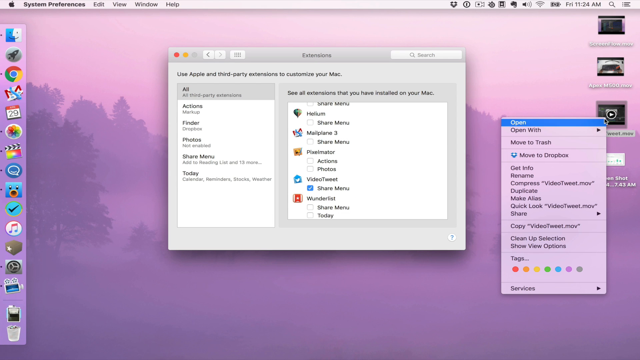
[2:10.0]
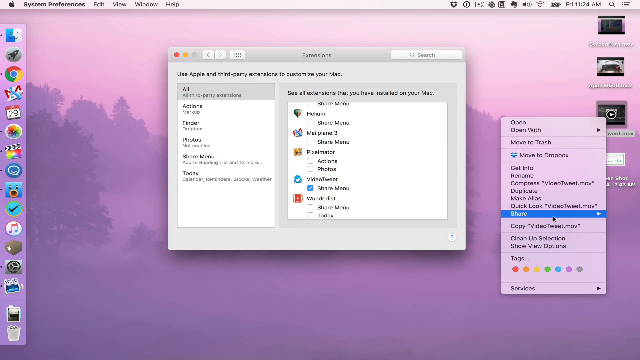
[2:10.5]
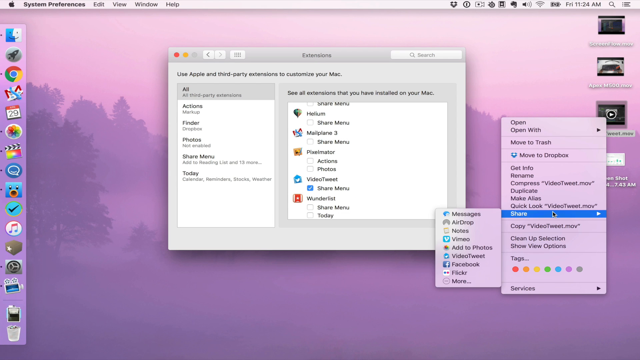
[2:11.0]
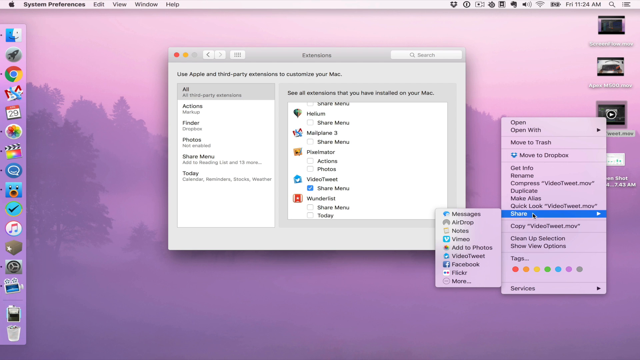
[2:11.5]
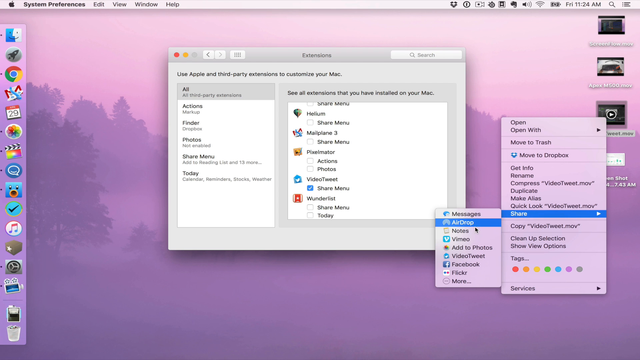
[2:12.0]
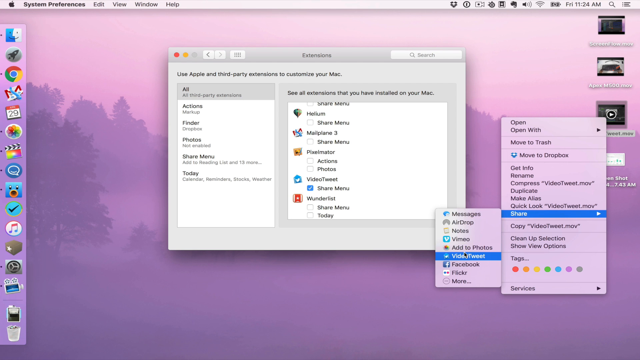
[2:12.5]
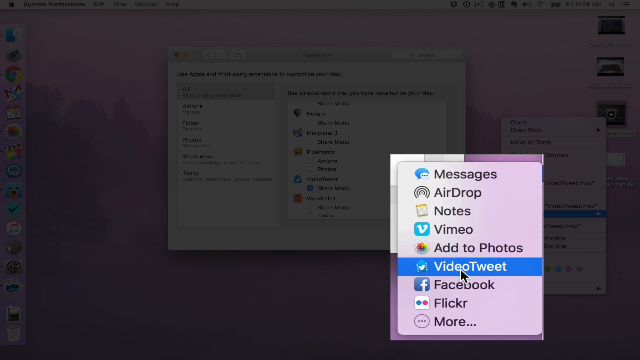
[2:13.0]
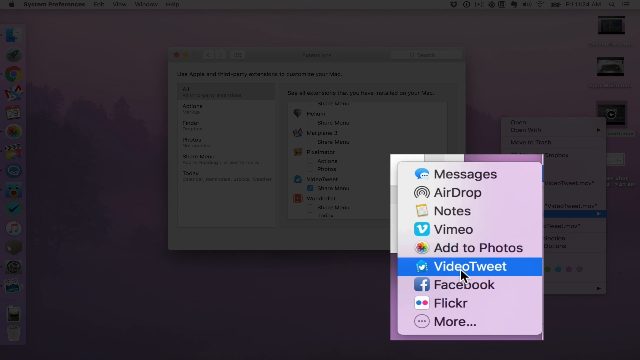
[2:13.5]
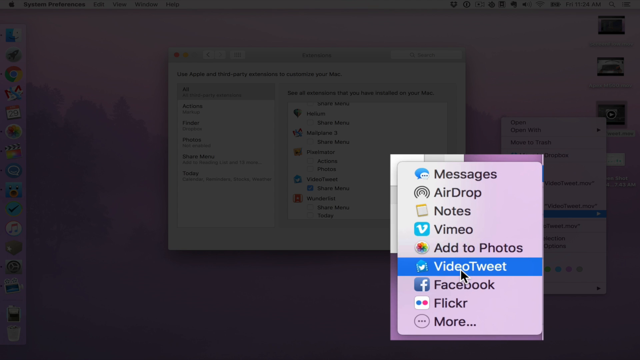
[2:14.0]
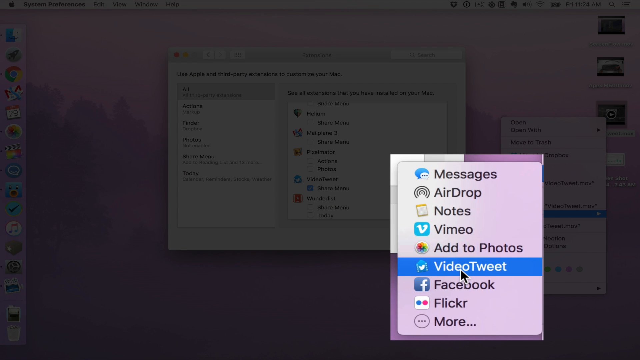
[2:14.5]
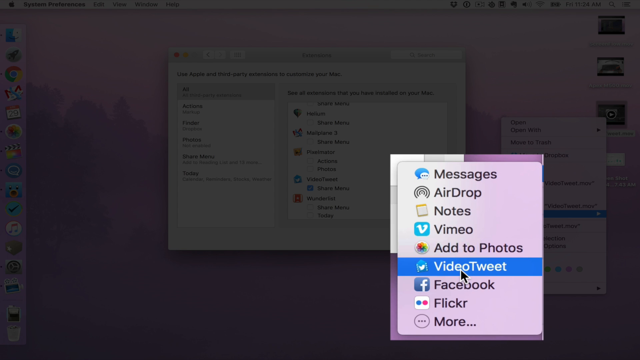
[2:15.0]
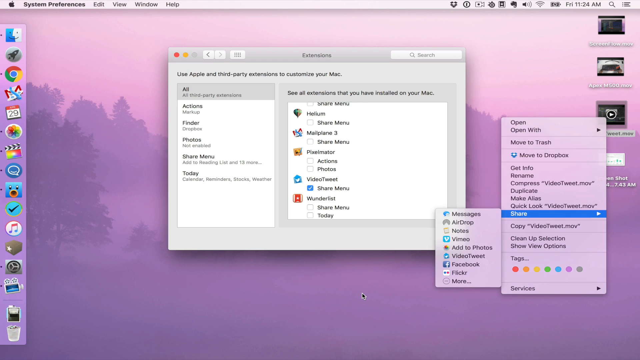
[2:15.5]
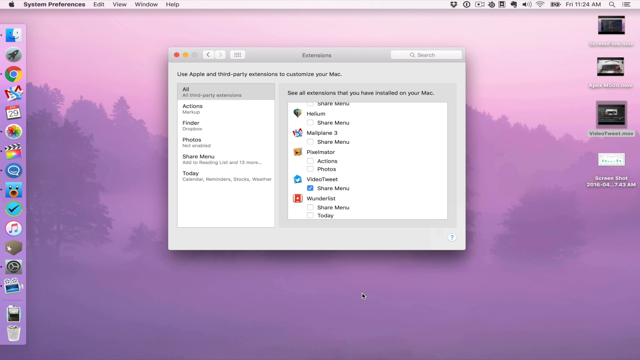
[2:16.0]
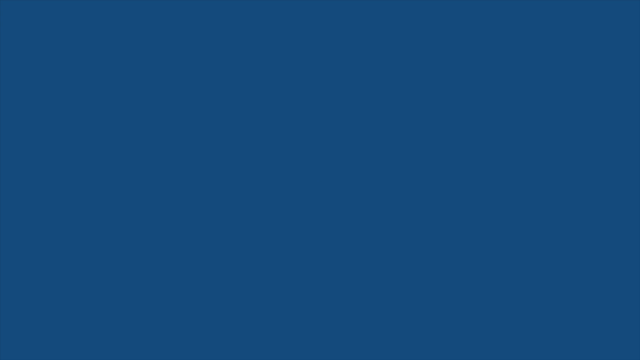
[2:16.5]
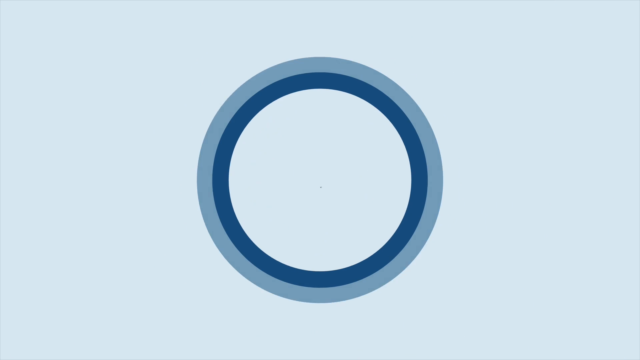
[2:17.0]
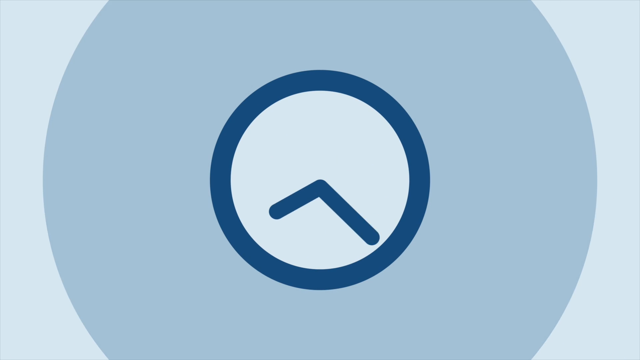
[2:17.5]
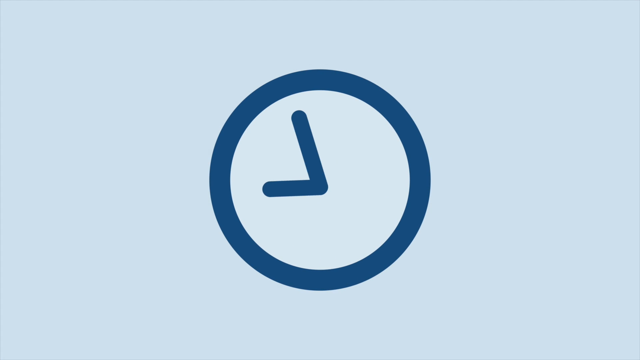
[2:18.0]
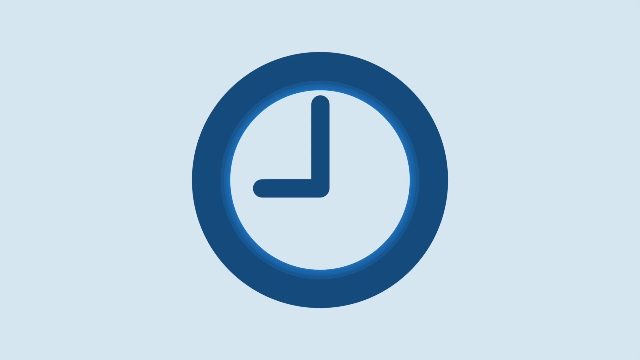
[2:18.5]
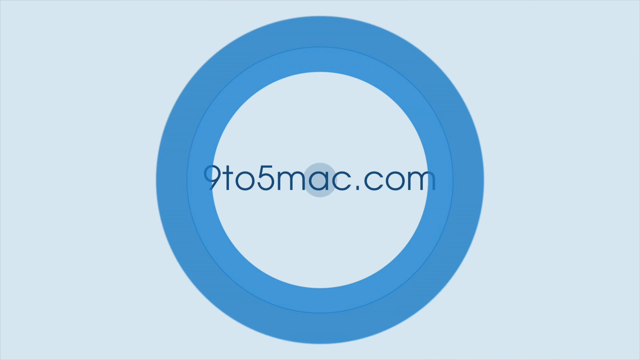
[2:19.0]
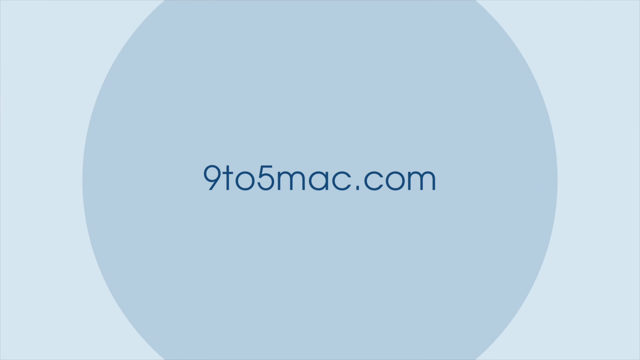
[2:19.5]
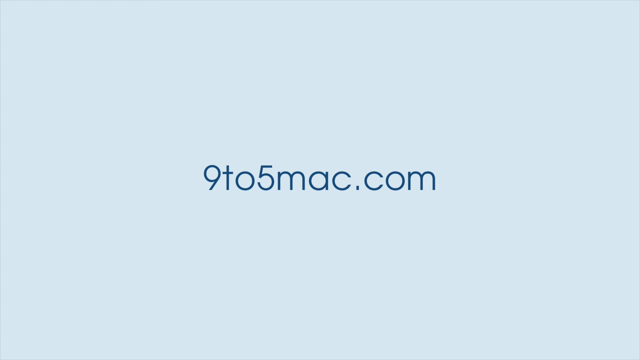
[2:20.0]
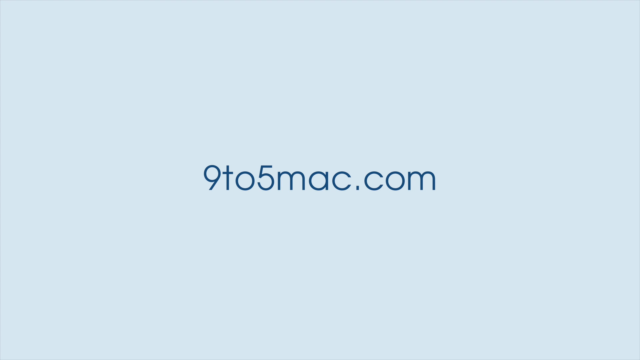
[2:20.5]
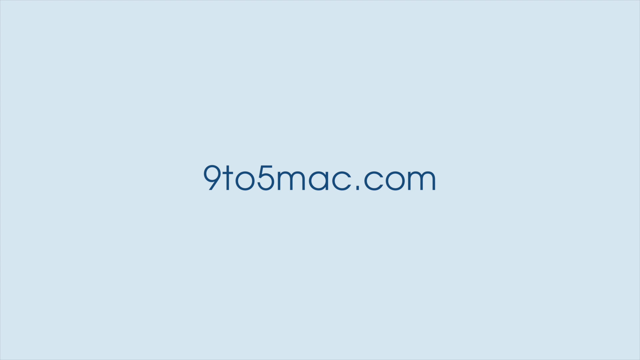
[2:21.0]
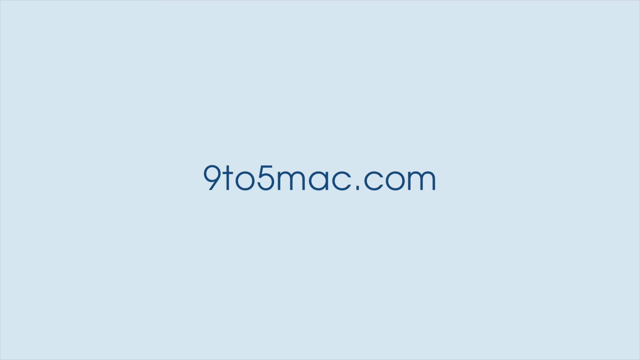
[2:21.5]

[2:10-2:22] The cursor moves down the command options, each lighting up in turn with a blue horizontal box as it passes, until it stops on the option to share. A sub-menu expands to the left with options such as messages, airdrop and notes. The cursor moves down this list to VideoTweet, and a superimposed close-up of it expands out to a larger size with the background dimmed; the VideoTweet option is highlighted in blue. The command panels disappear and the video cuts to a blue screen where once again a white circle emerges from the middle of the screen and a larger white circle moves outward to create a blue ring. The ring turns into a clock face whose animated hands move to 9, and the pieces then all disassemble and move toward the viewer, leaving "9to5mac.com" written in blue on a light blue background.